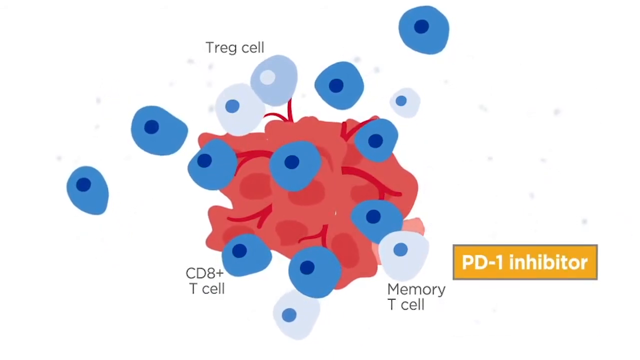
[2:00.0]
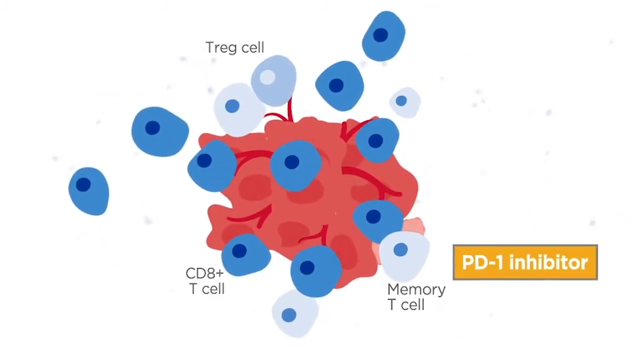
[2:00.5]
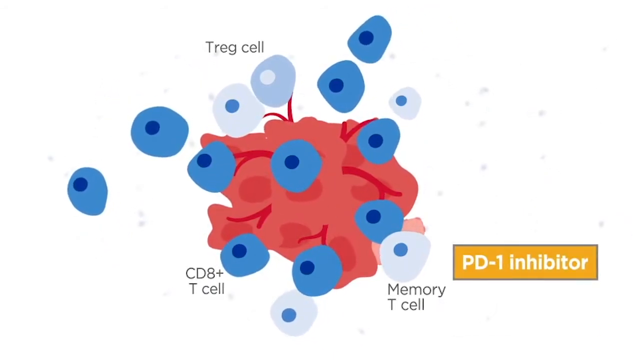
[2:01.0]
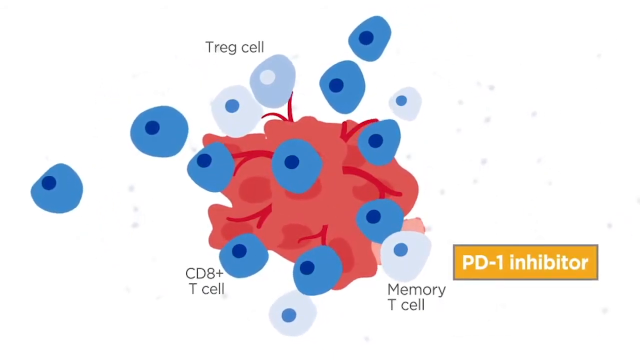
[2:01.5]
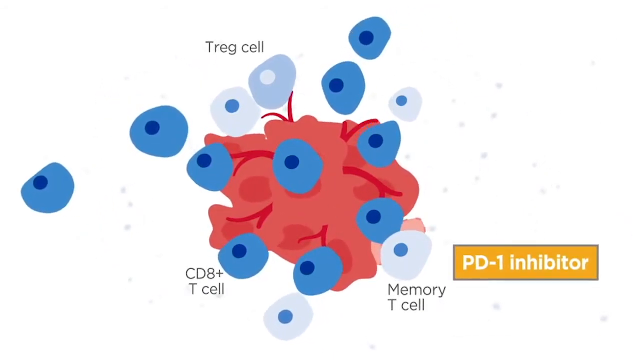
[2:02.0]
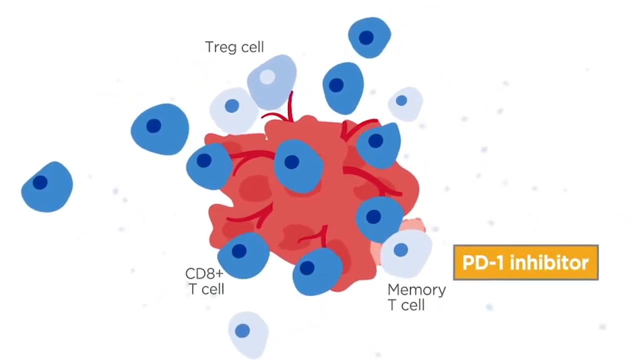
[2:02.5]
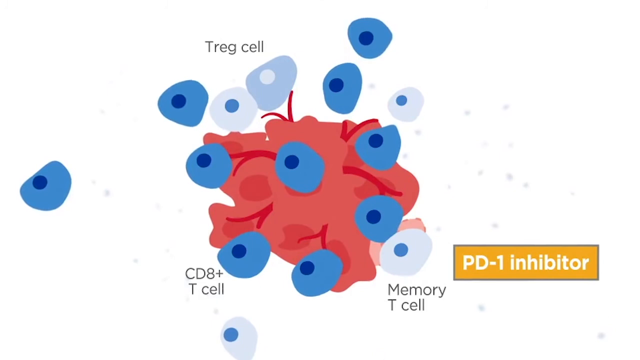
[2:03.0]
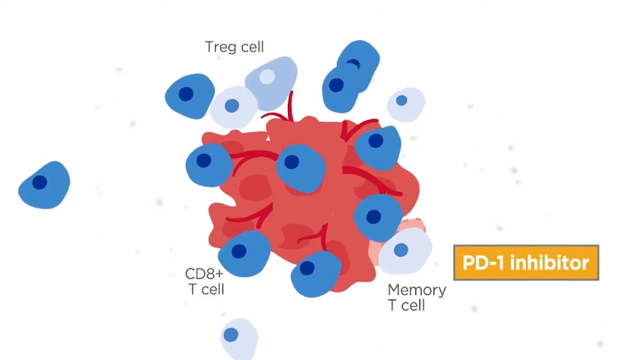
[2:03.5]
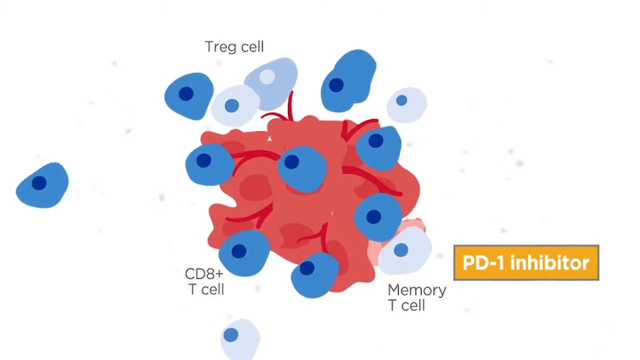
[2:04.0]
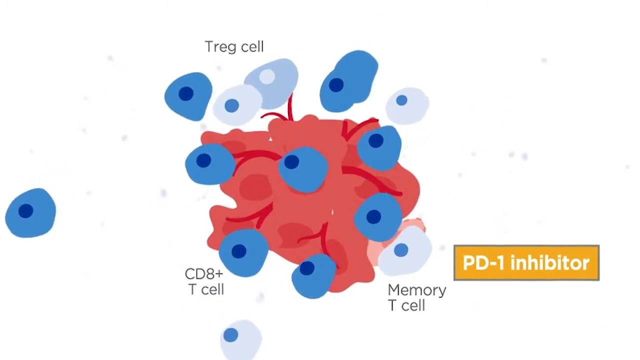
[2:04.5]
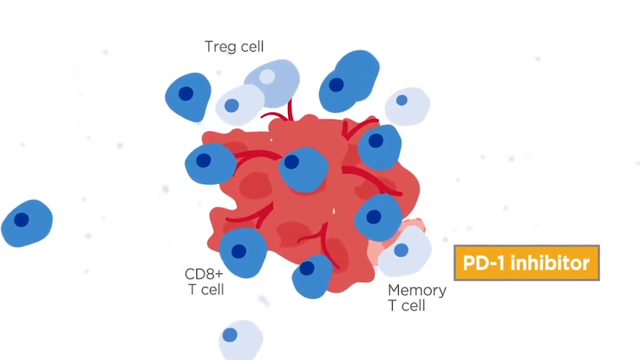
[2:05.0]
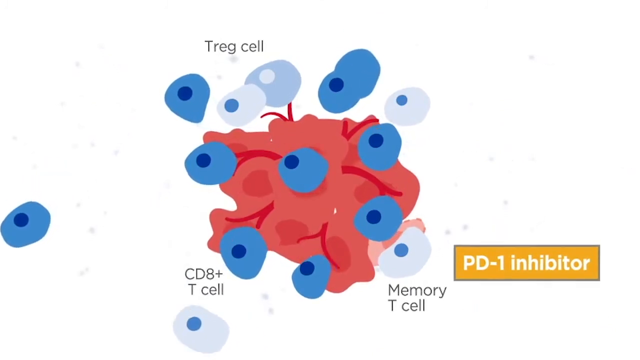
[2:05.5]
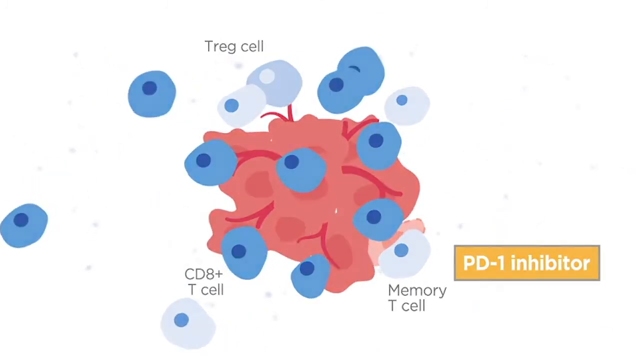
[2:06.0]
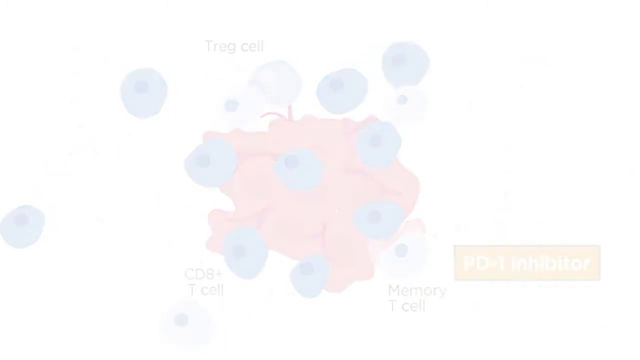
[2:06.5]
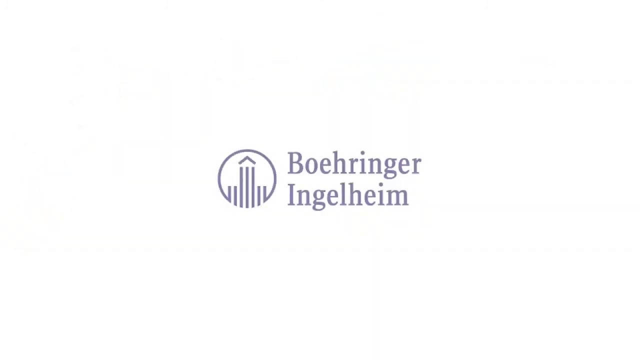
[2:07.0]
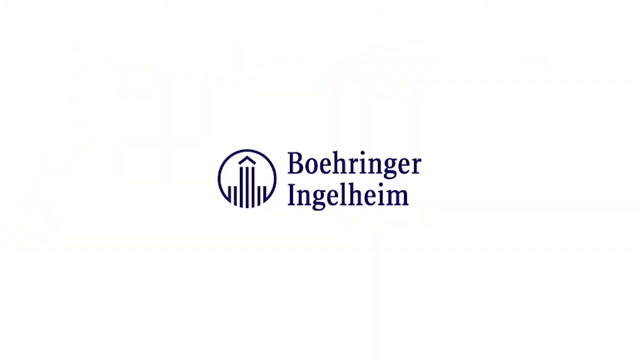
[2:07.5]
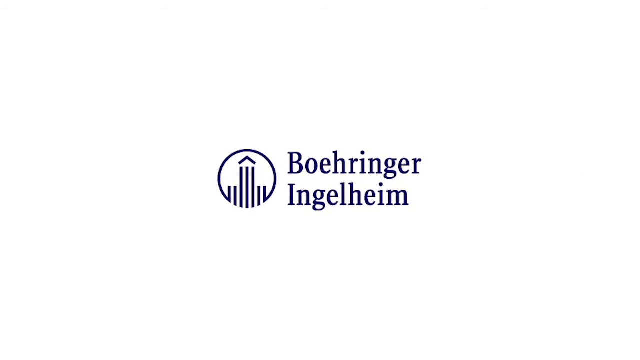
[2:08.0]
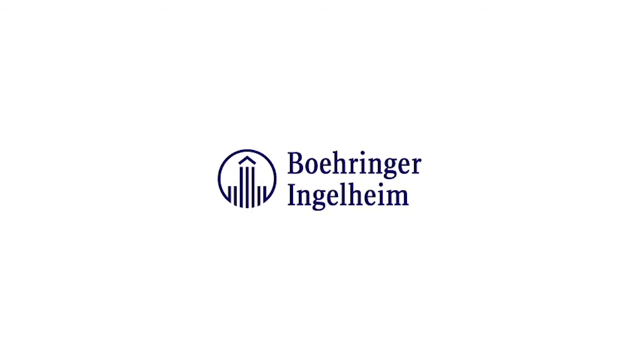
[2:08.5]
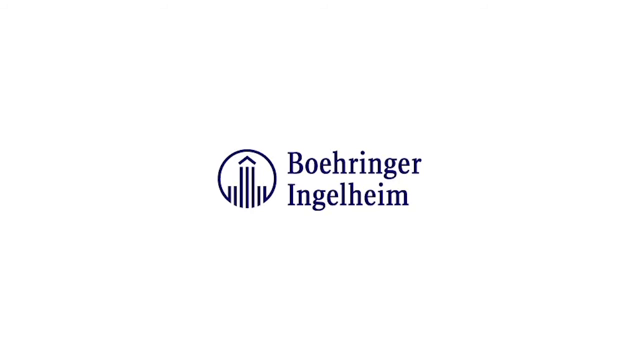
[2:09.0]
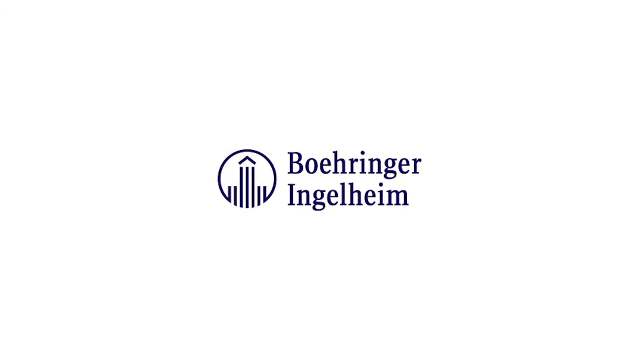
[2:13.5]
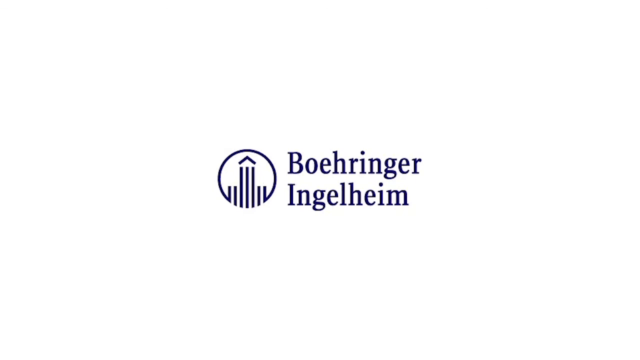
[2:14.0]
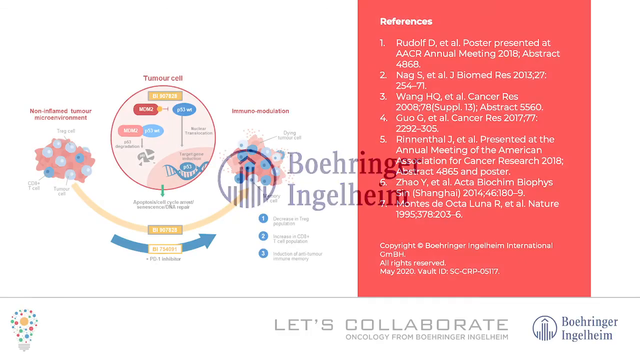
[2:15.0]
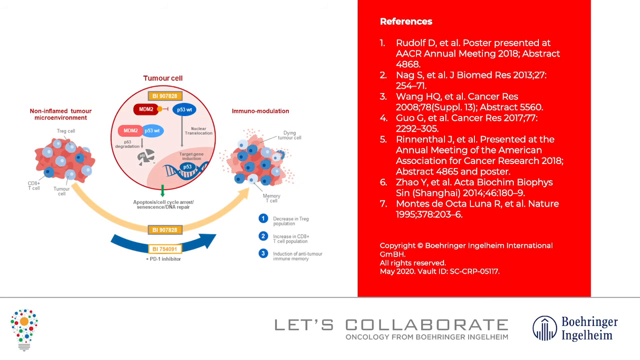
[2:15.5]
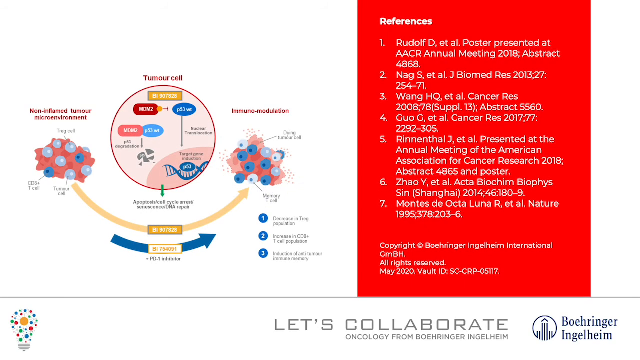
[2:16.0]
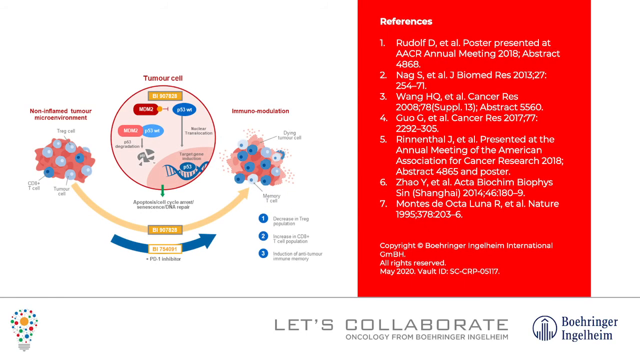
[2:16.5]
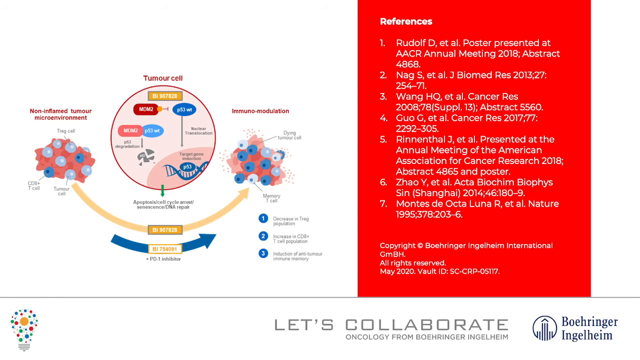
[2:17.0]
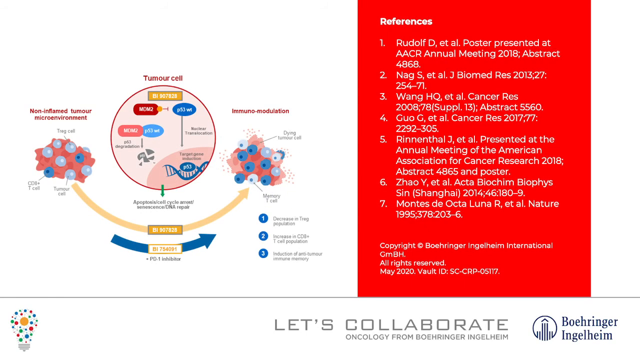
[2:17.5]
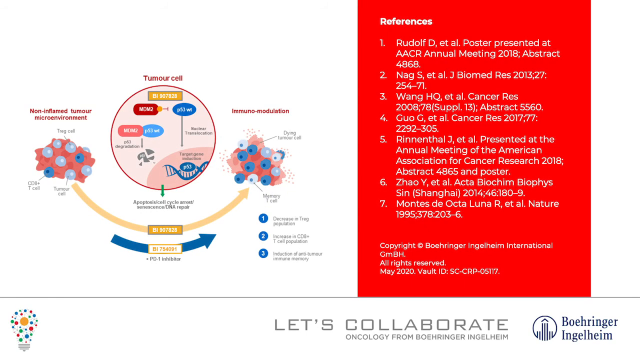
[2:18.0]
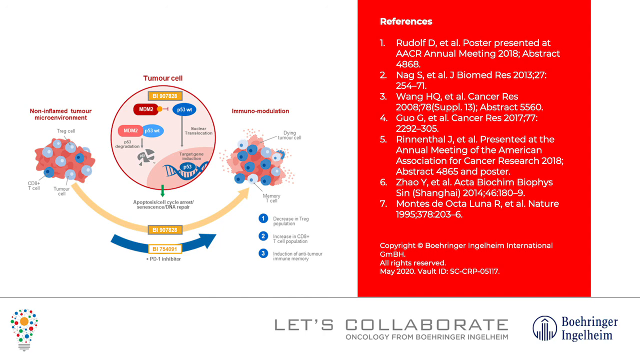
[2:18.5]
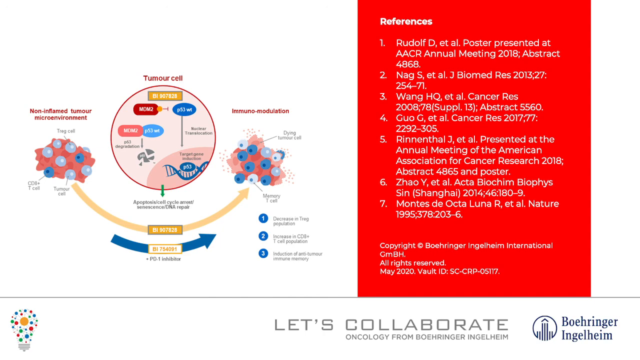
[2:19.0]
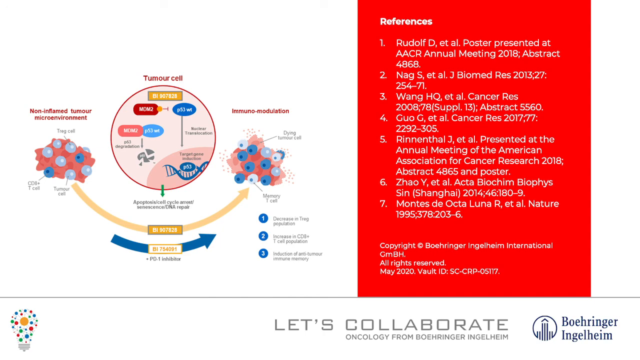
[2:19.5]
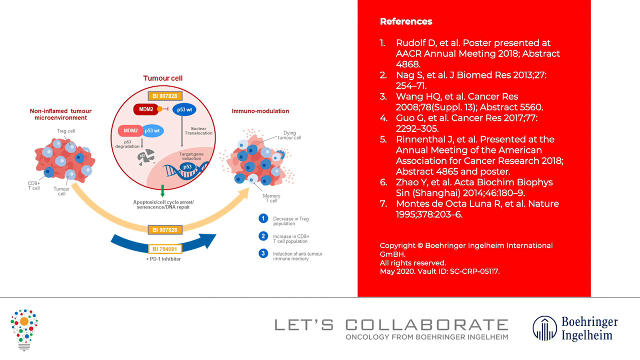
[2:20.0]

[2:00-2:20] A red tumor is attacked by dark blue cells that multiply, and the pink on the top of the cell breaks up and chisels off, leaving just the bottom of the tumor remaining. The dark blue cells float around the tumor, and some attach themselves to it. Some light blue cells still remain. The name Bowringer Helen appears on the far right at the bottom, and "PD-1 inhibitor" is labeled on the right lower side. References are listed on a red screen on the right side.